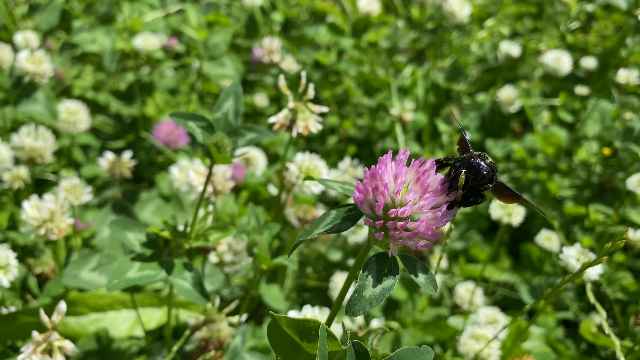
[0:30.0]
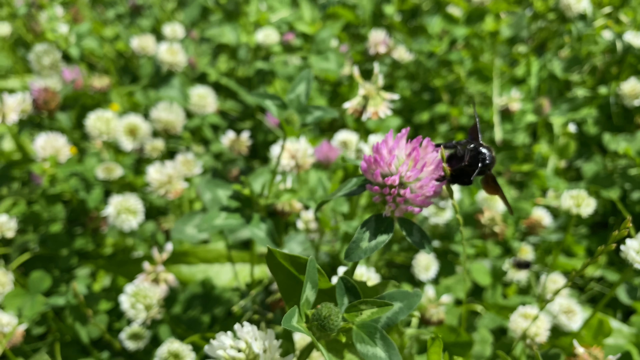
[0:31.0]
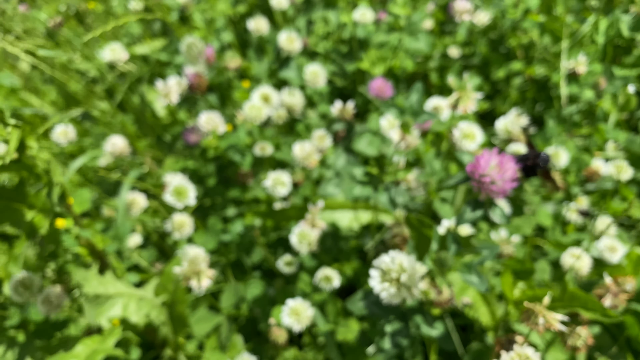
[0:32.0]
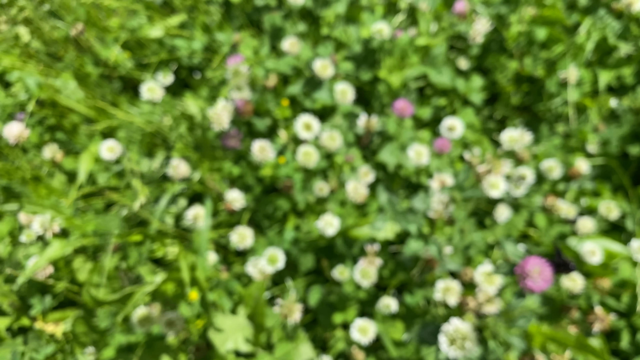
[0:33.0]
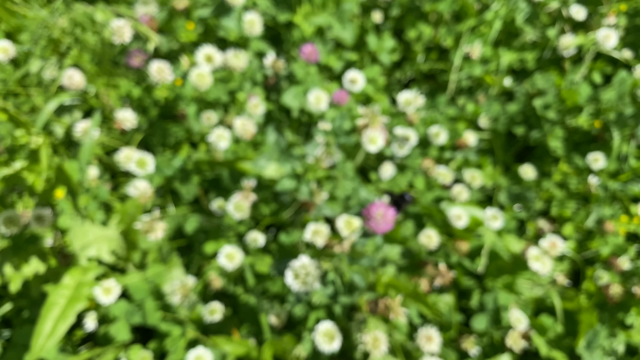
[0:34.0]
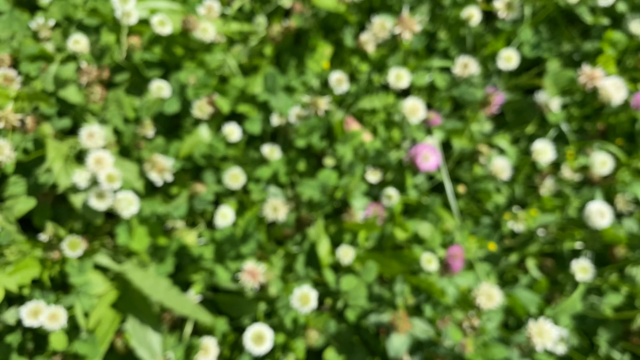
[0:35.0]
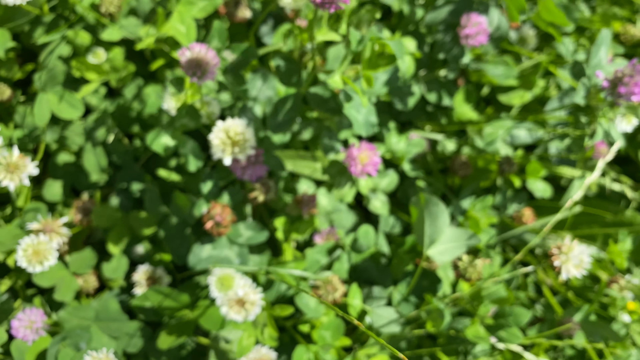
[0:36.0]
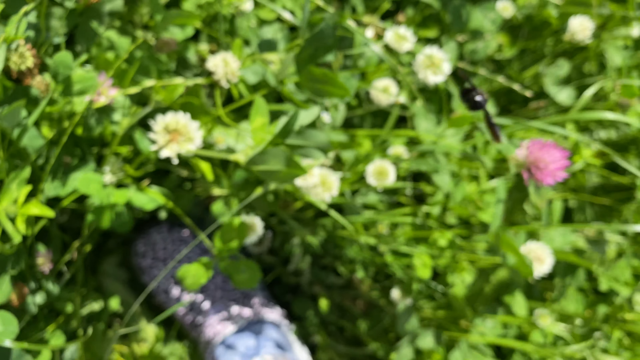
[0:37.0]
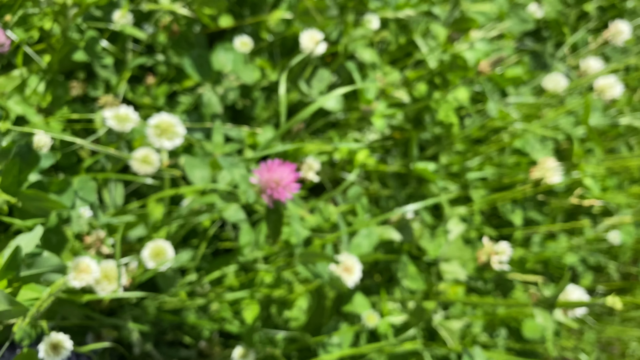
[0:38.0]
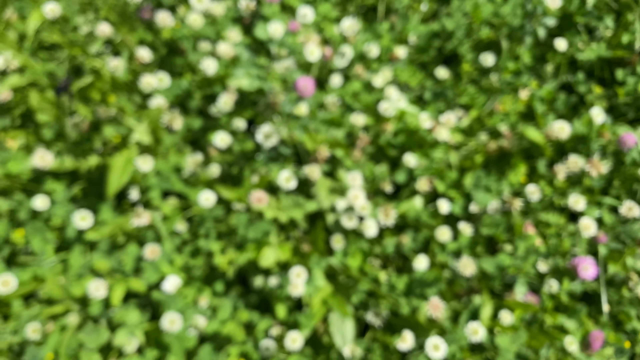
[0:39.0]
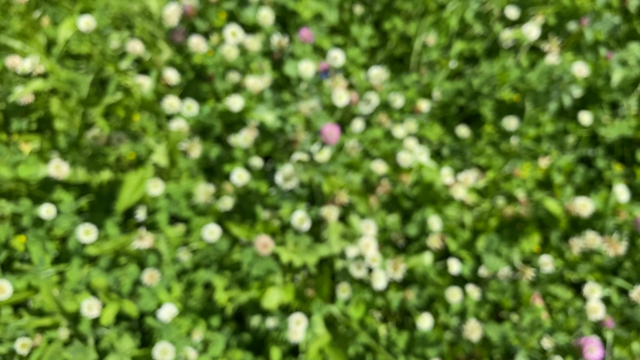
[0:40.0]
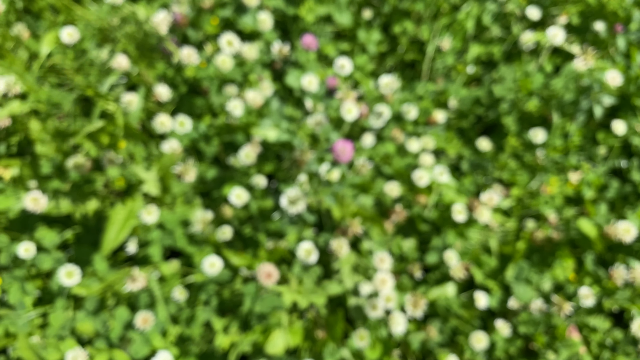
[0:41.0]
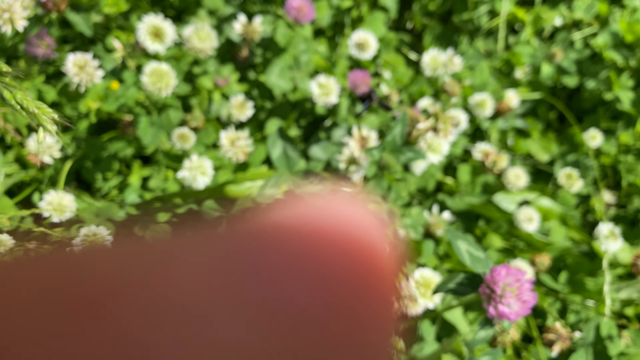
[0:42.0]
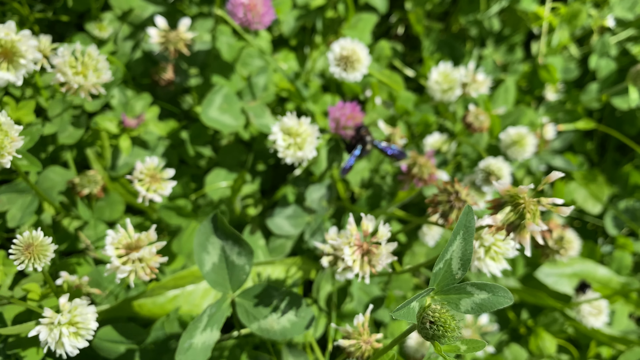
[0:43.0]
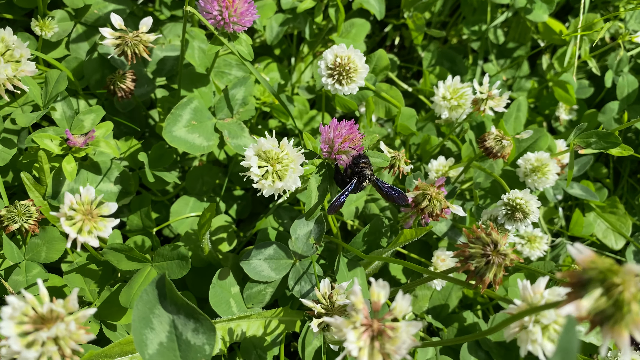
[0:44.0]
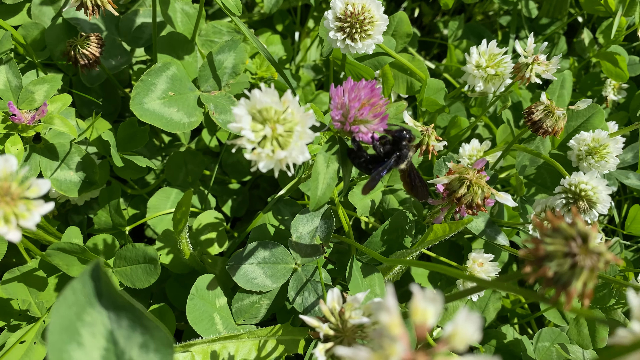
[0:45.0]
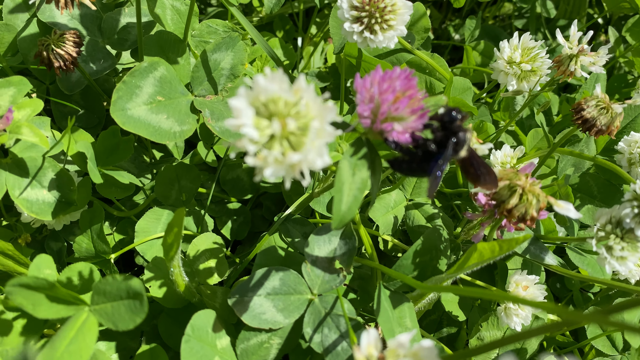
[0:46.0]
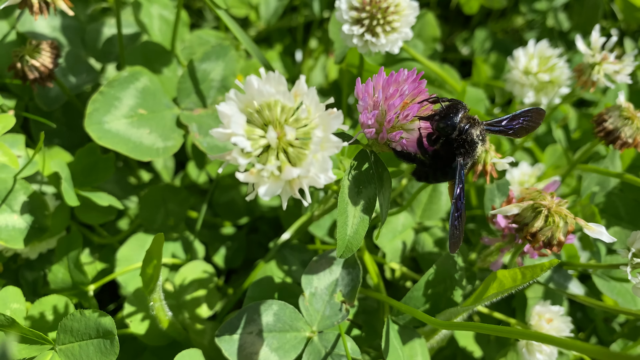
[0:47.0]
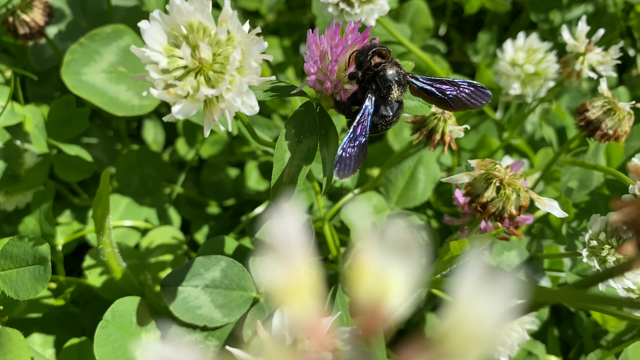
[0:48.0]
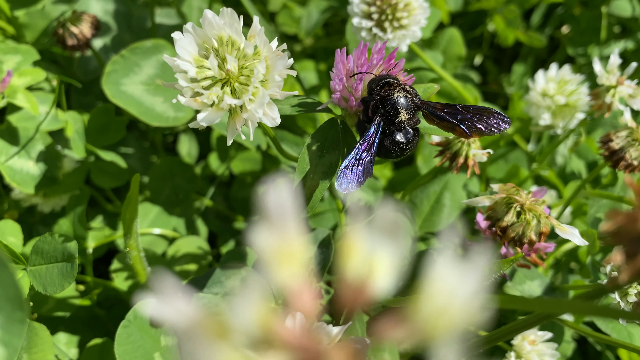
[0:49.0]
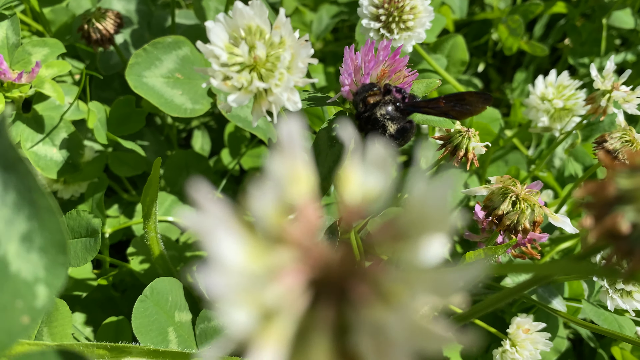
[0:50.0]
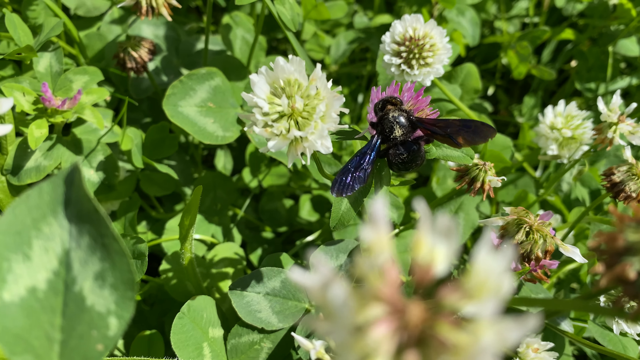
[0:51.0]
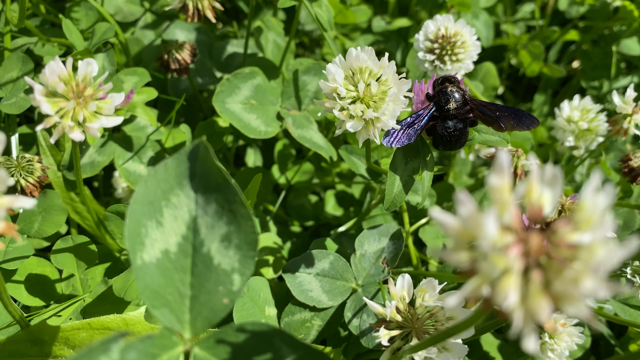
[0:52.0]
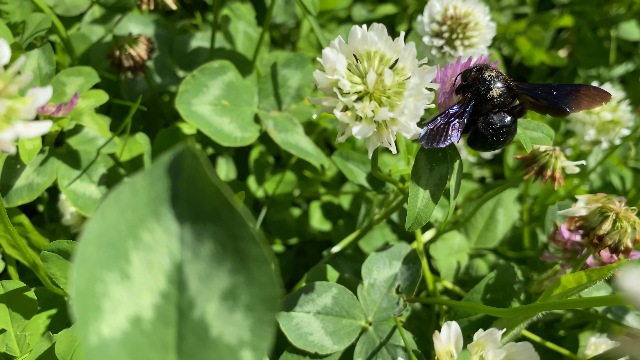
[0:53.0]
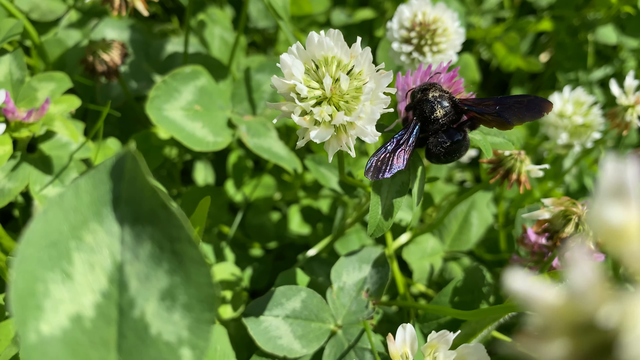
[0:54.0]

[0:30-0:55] The bumblebee flies from flower to flower in the wildflower garden. The garden has several different wildflowers; many are white, while the purple wildflowers look more mature. As the bee leaves one purple wildflower, it flies right over to another purple wildflower and starts collecting nectar from it, skipping over all the white ones. The bee is mostly black, with an almost all-black body, black wings, and just a small splotch of yellow in the center of its back.